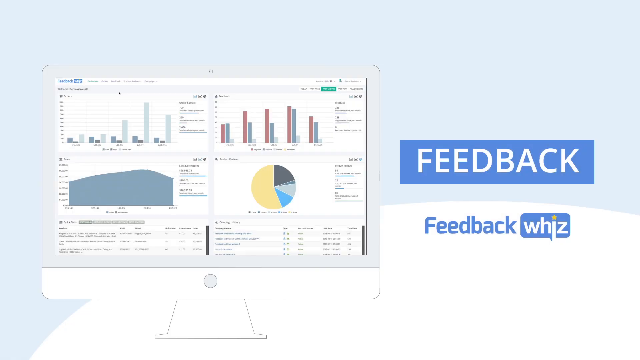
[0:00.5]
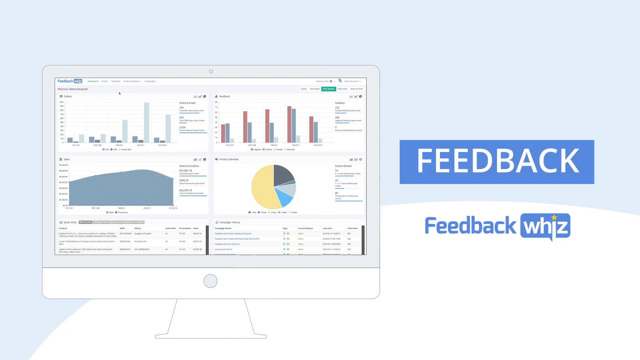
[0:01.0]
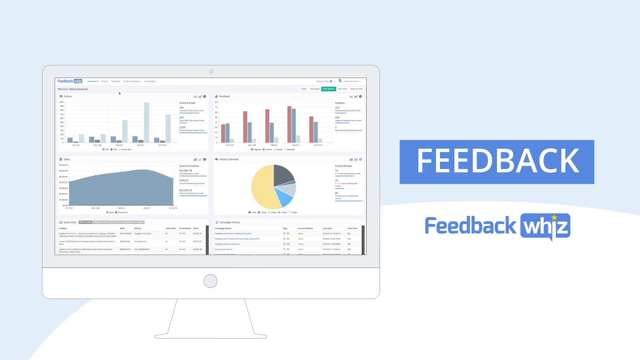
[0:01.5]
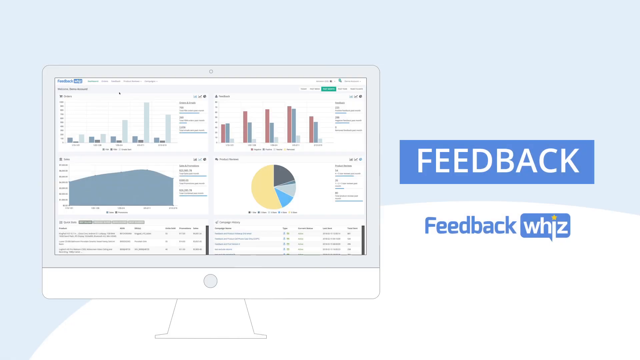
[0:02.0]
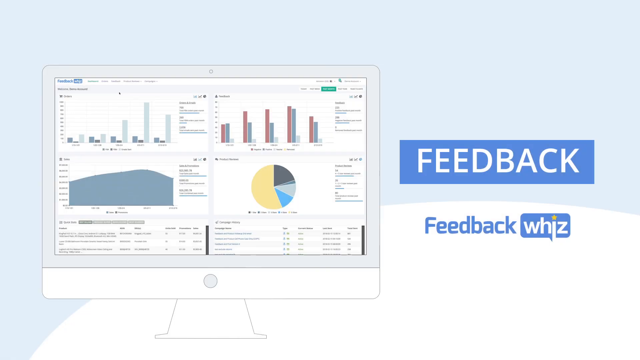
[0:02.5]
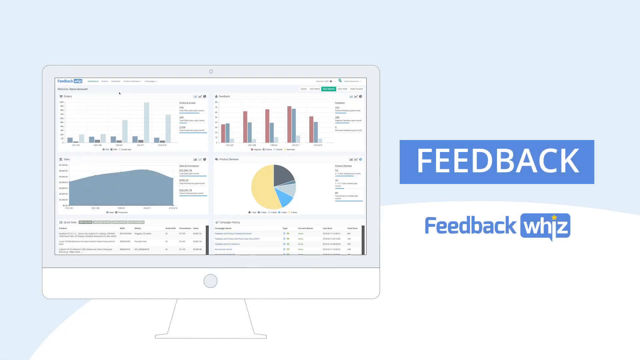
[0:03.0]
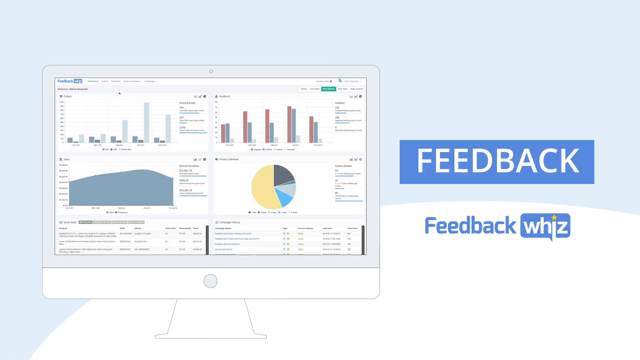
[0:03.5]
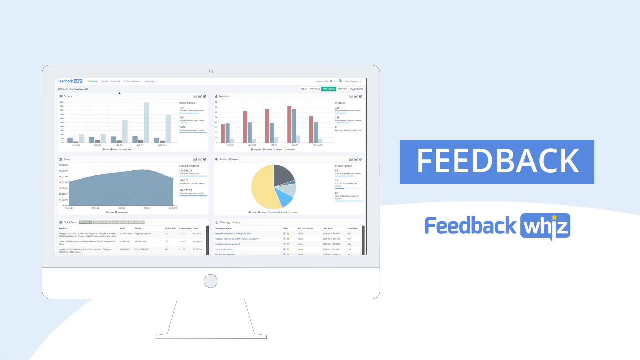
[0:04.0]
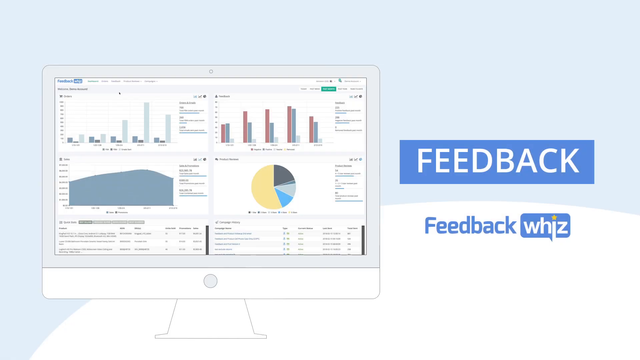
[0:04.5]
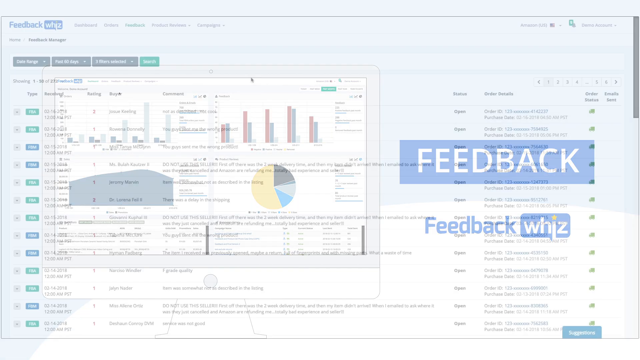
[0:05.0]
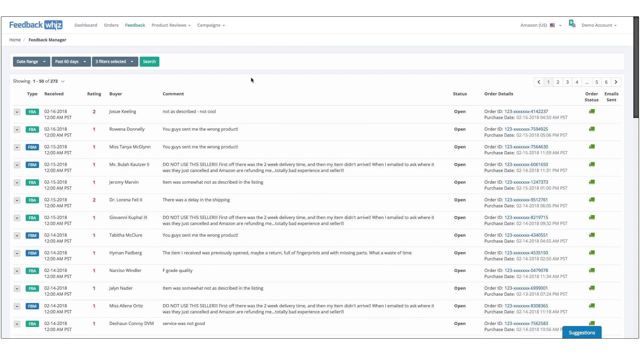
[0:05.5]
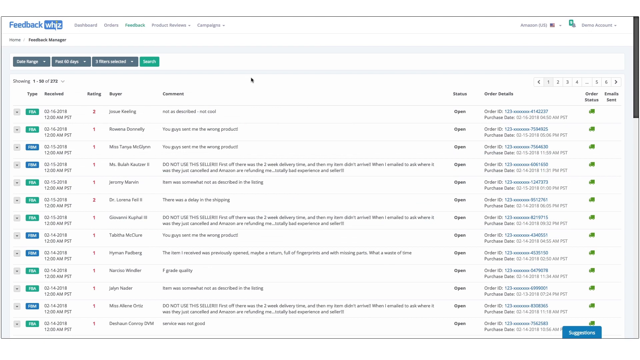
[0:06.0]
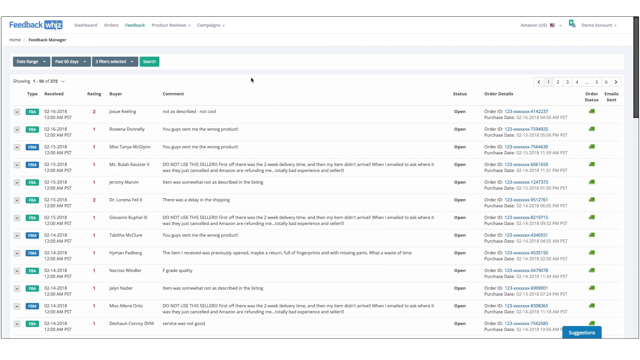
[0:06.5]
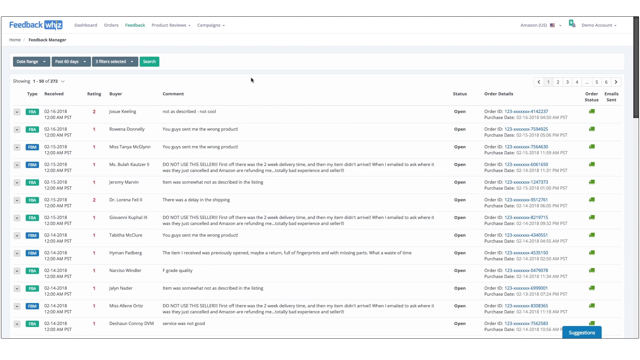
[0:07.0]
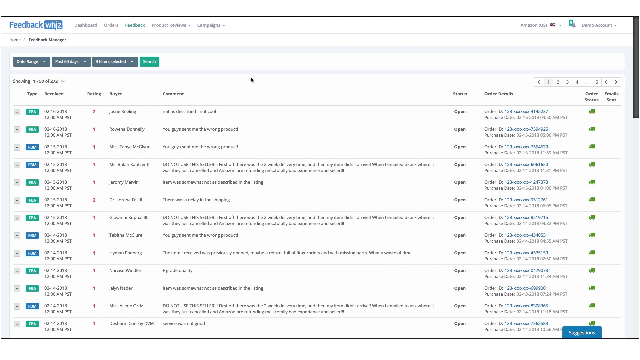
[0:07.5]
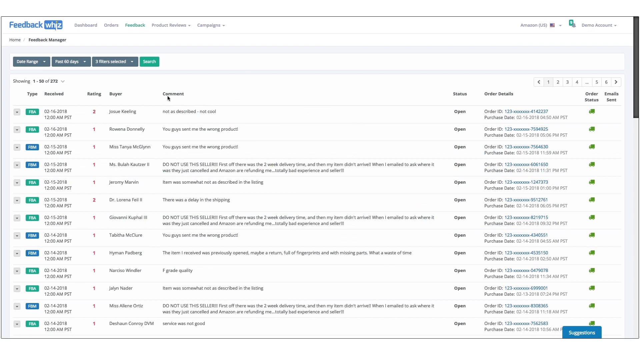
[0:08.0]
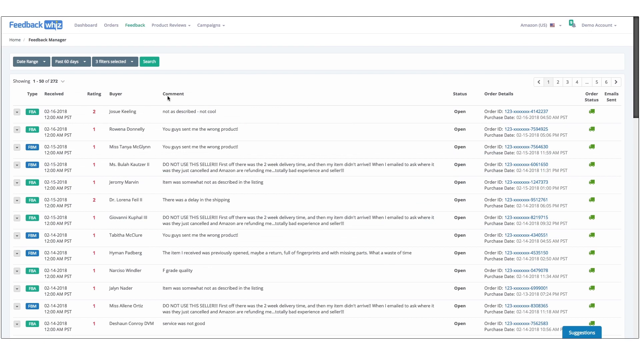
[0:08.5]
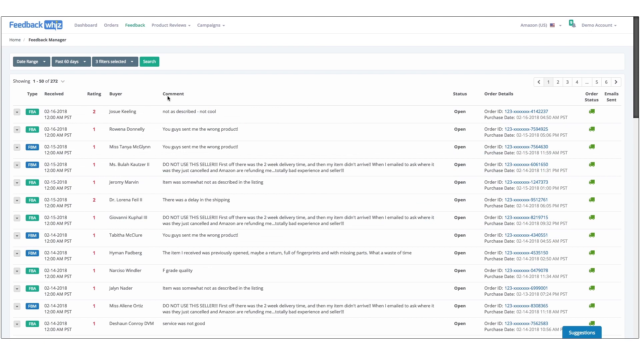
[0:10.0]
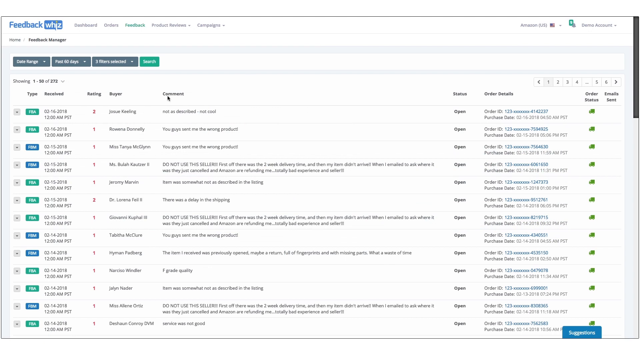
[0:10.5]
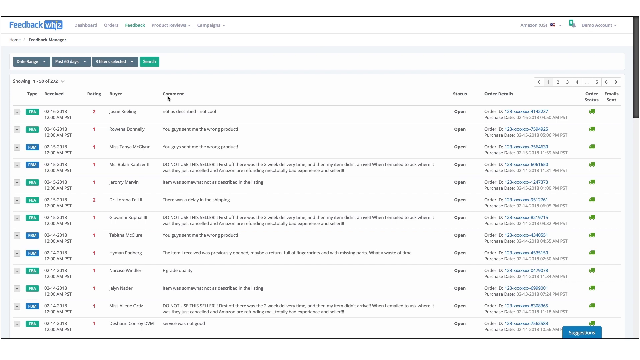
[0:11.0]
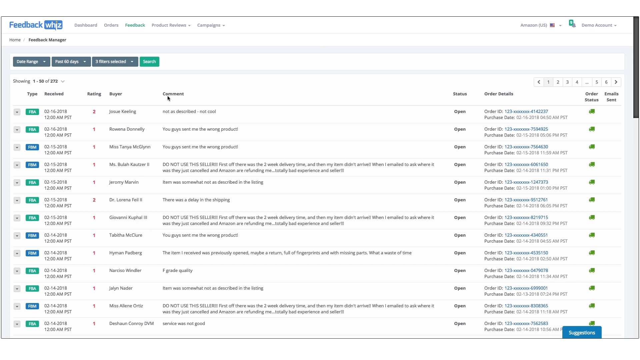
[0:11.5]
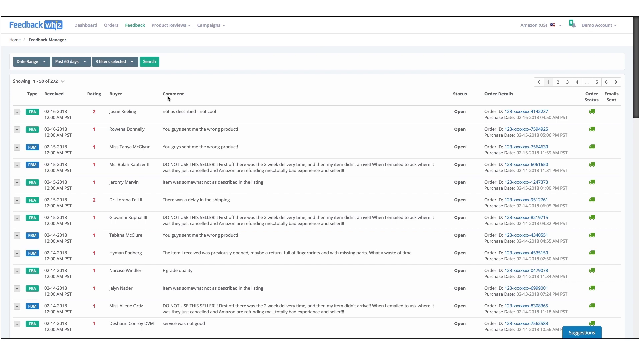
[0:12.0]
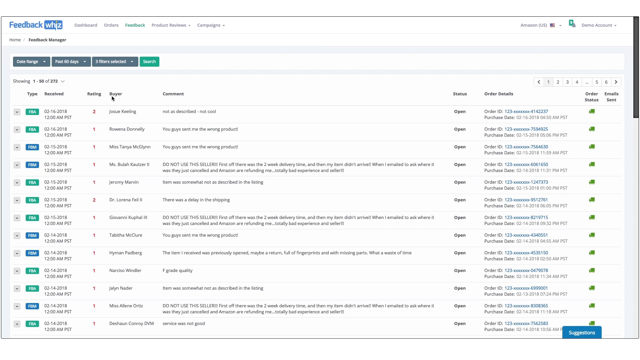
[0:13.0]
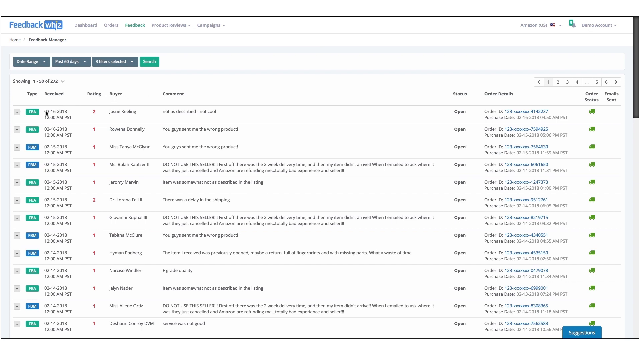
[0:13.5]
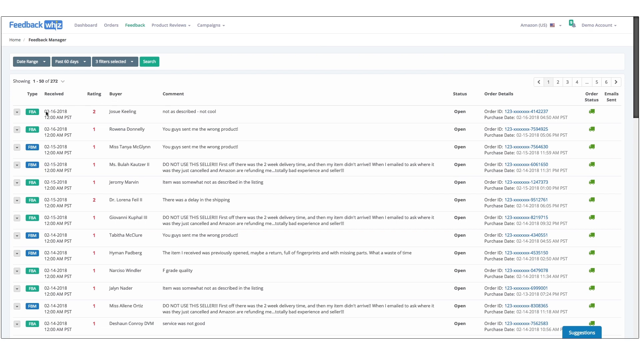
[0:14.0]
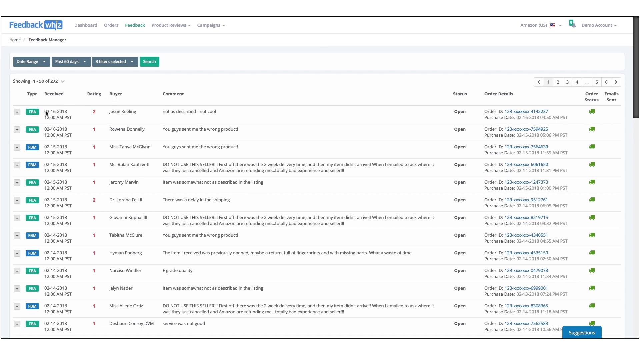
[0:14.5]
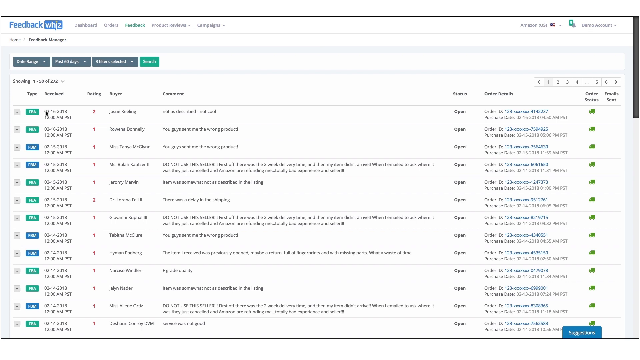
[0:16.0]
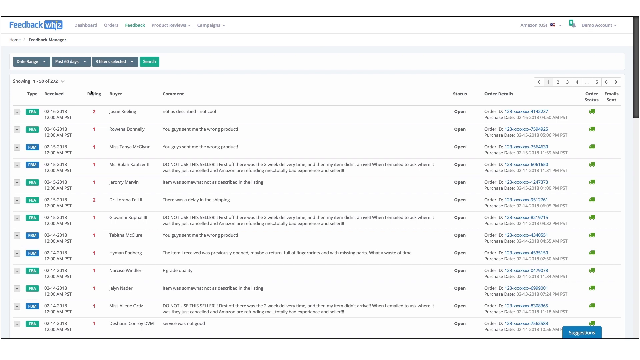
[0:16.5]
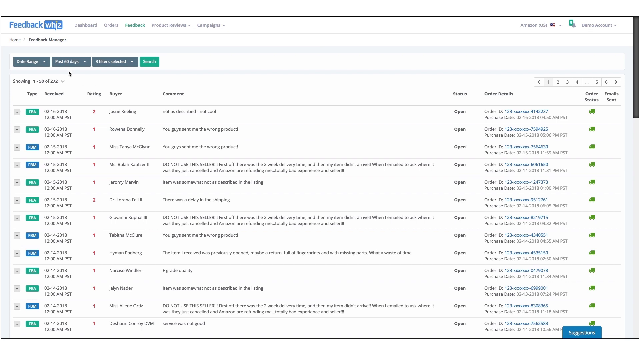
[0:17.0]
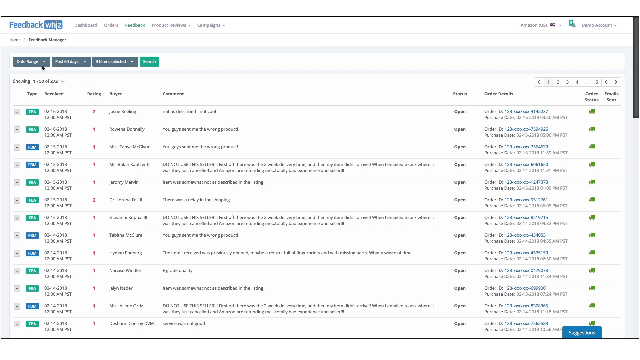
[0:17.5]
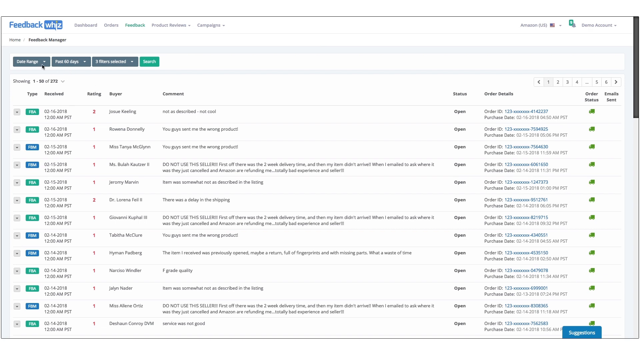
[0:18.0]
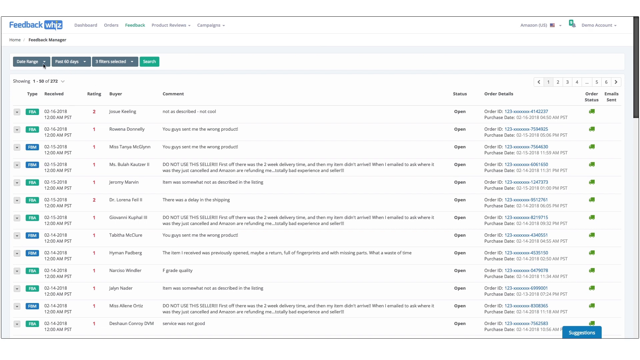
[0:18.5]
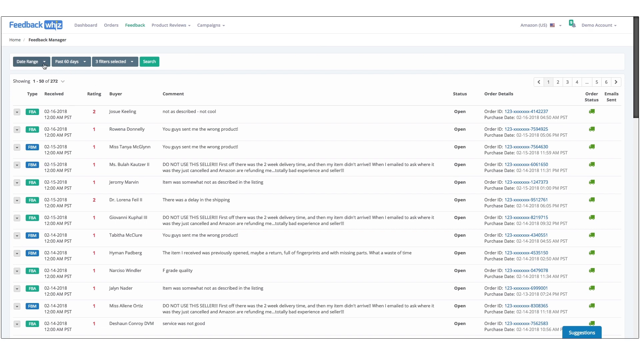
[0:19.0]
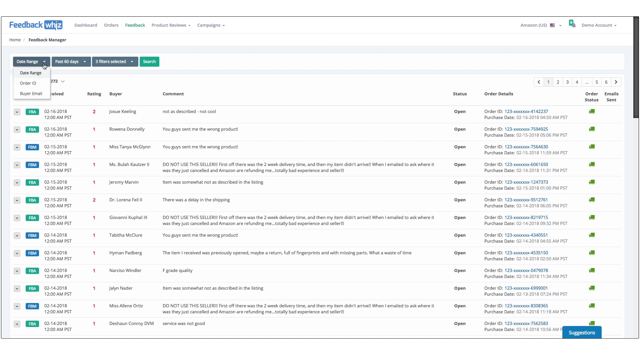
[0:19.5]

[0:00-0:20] Charts appear in what looks like FeedbackWiz, a program that almost resembles Outlook Express. Someone seems to be giving a demo, as a mouse cursor moves around the screen. There are pie charts, bar charts and line charts, along with order details that make it look like an order system for a company: the time each order was received, the buyer's name, comments on the orders, the type, and the order status showing whether each order is open or closed. Up top, it looks like the orders can be sorted by past 30 days, 60 days, or by date.